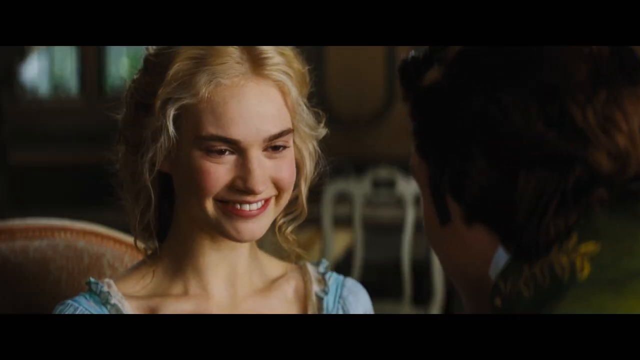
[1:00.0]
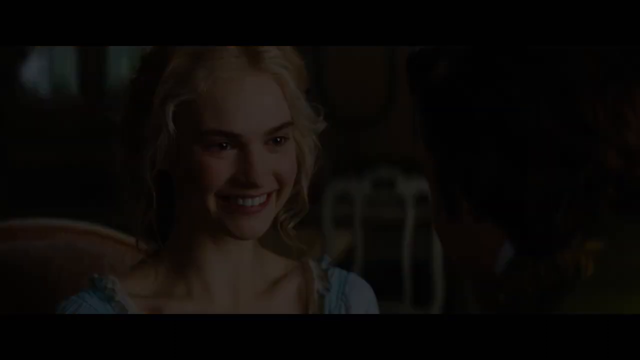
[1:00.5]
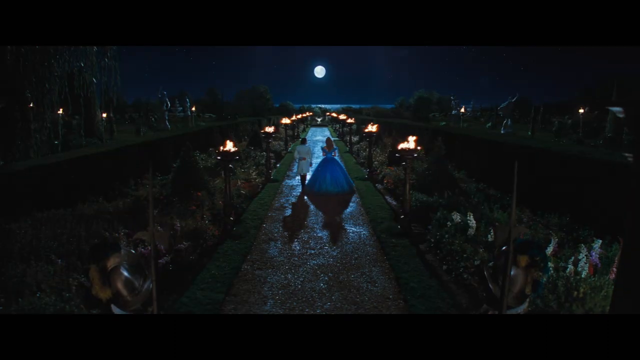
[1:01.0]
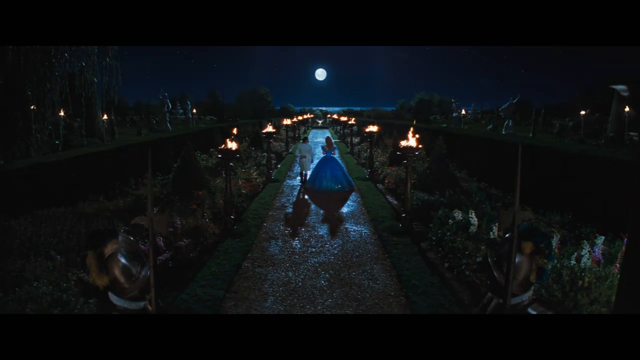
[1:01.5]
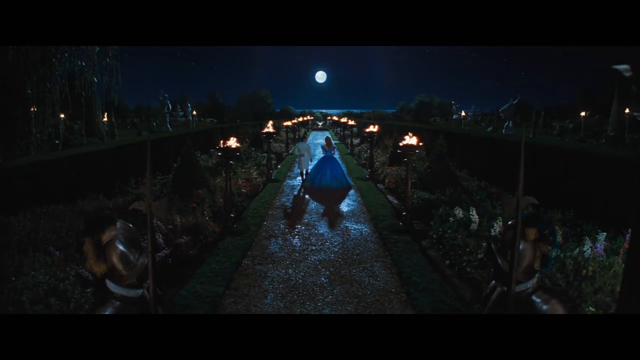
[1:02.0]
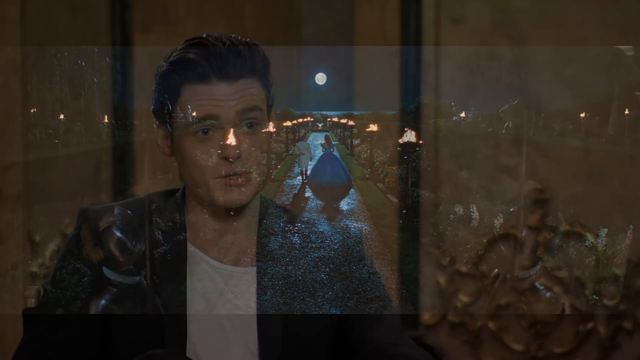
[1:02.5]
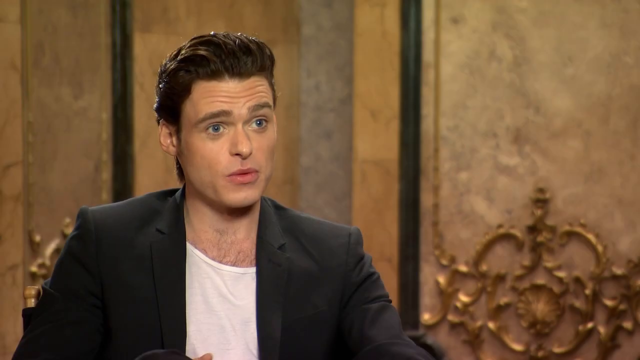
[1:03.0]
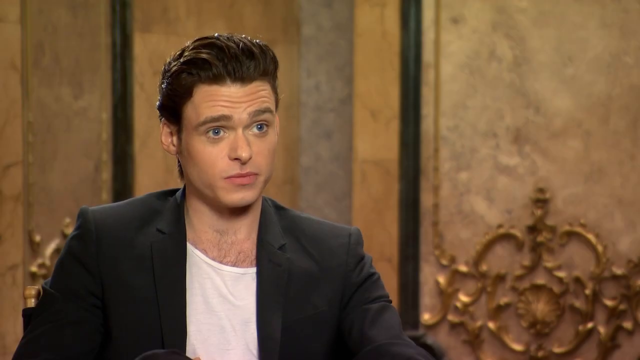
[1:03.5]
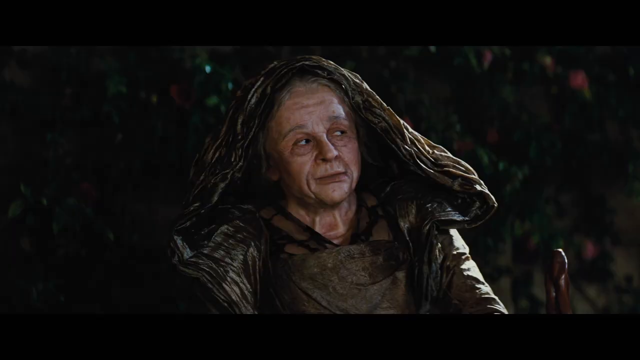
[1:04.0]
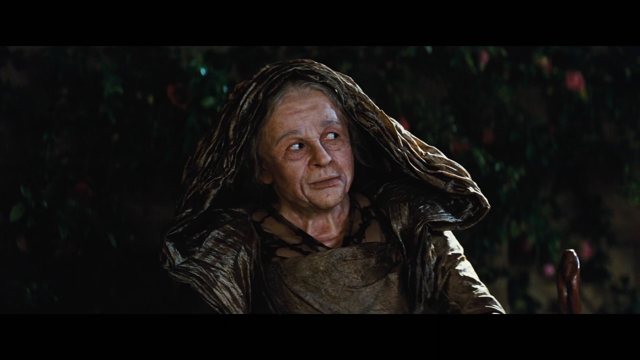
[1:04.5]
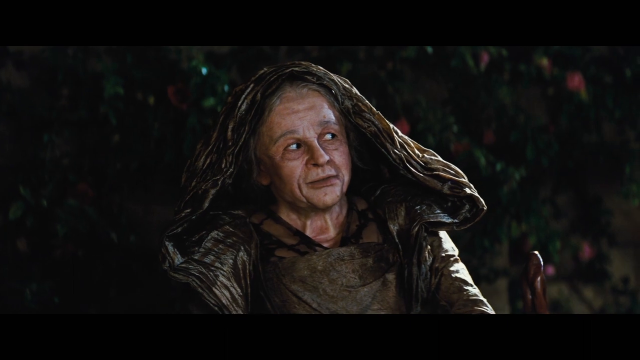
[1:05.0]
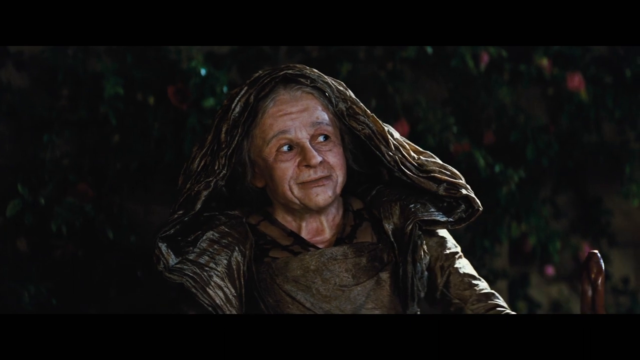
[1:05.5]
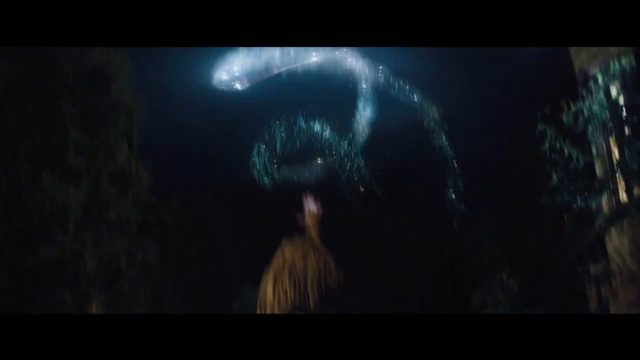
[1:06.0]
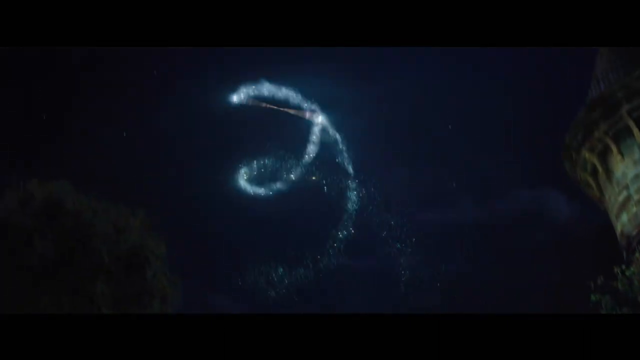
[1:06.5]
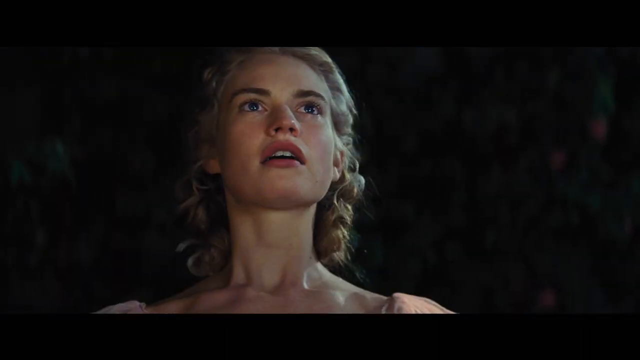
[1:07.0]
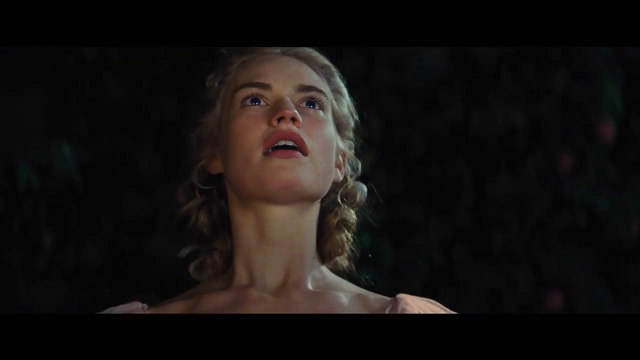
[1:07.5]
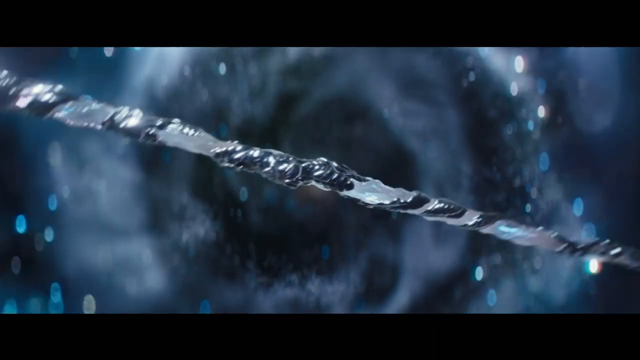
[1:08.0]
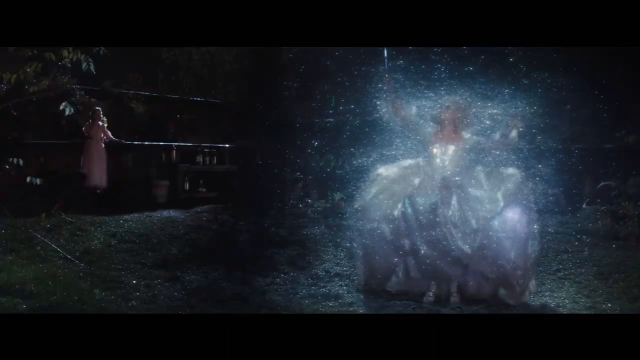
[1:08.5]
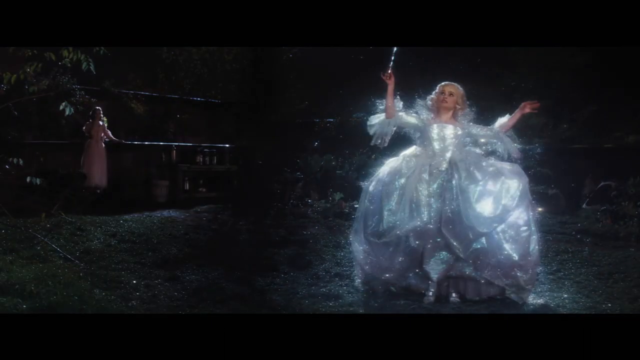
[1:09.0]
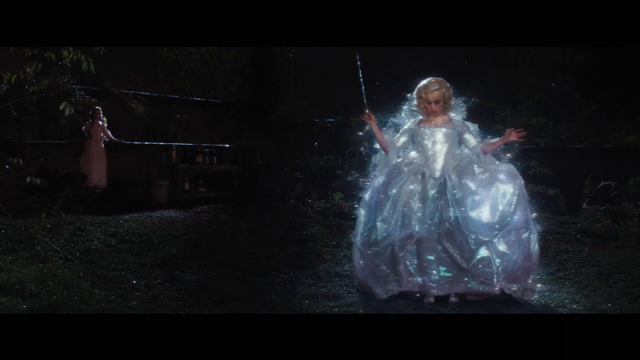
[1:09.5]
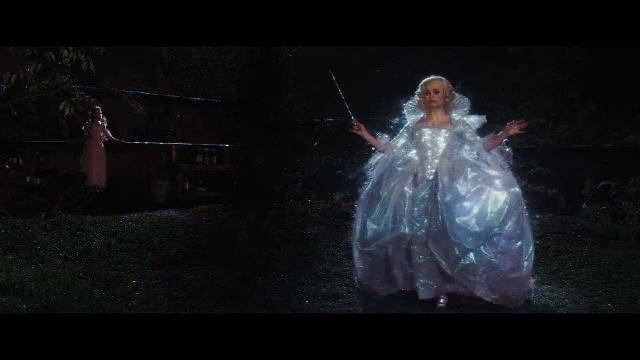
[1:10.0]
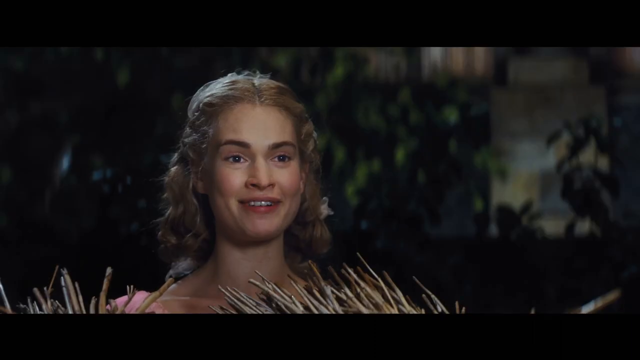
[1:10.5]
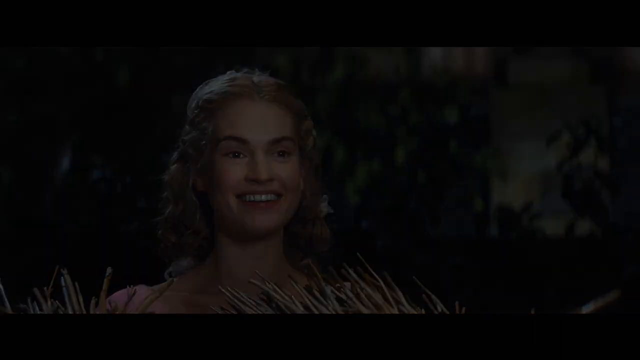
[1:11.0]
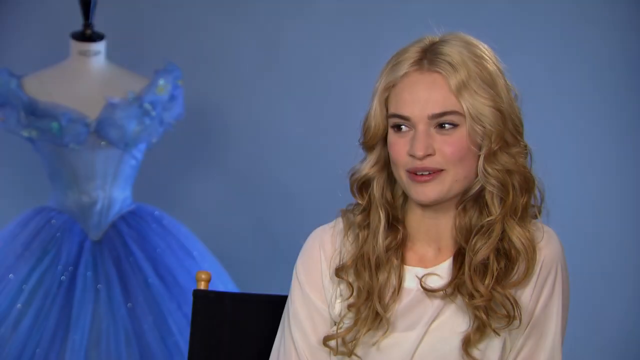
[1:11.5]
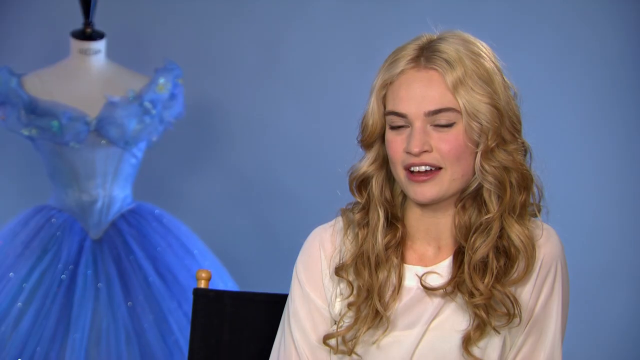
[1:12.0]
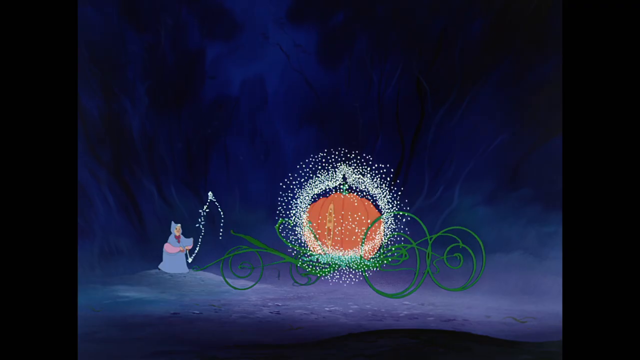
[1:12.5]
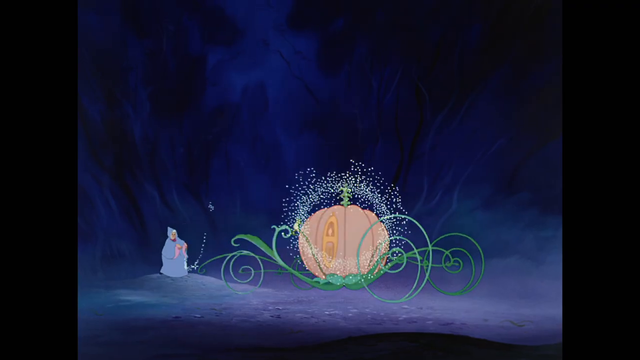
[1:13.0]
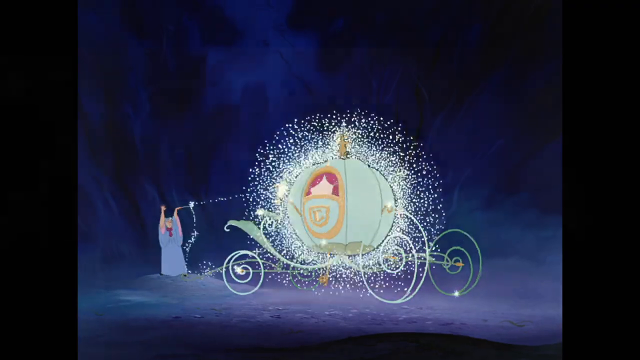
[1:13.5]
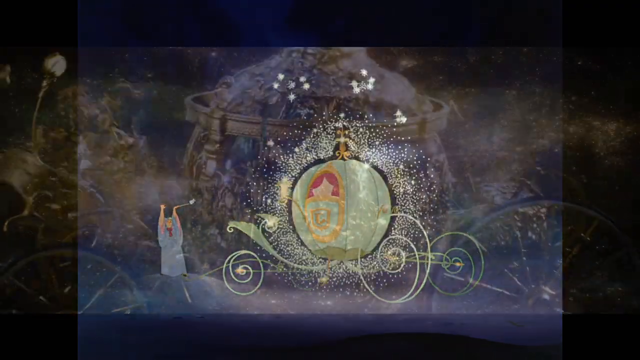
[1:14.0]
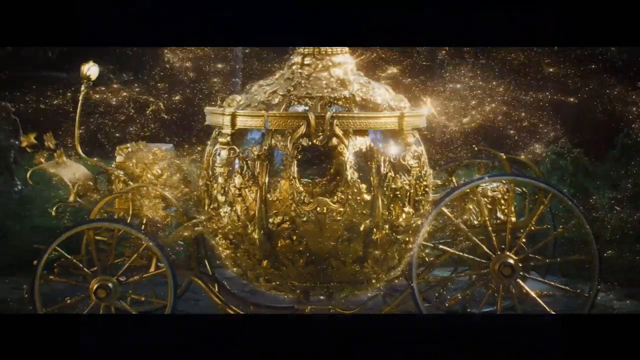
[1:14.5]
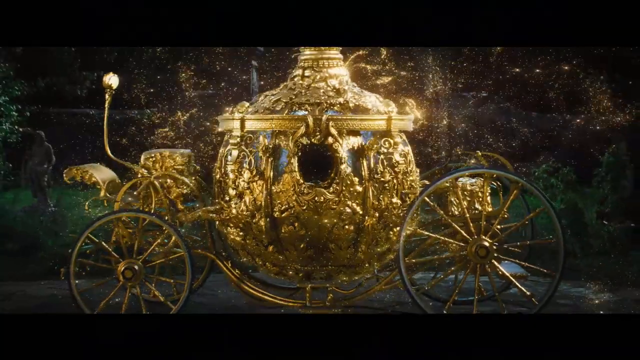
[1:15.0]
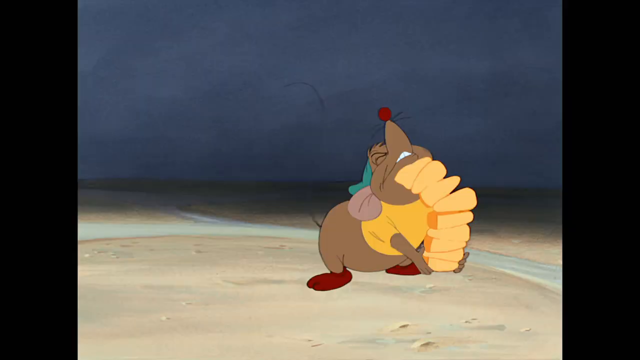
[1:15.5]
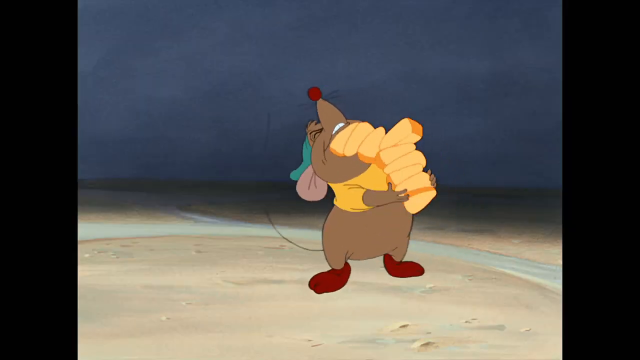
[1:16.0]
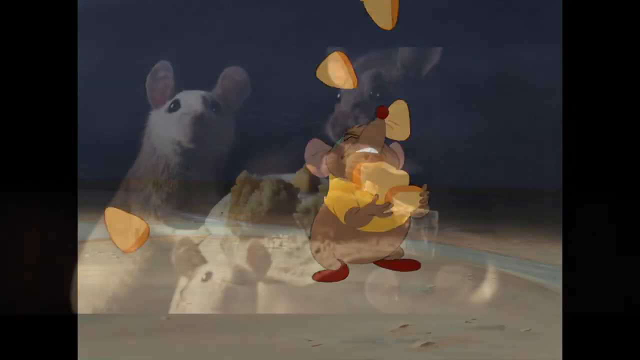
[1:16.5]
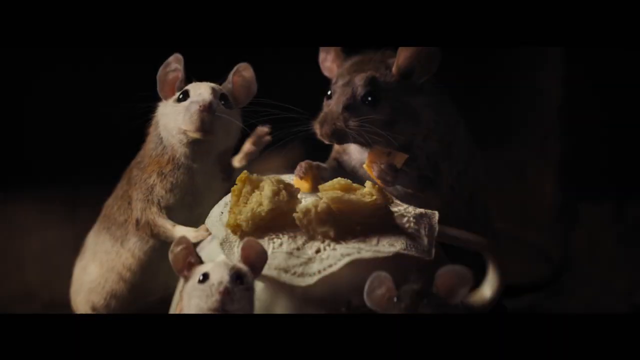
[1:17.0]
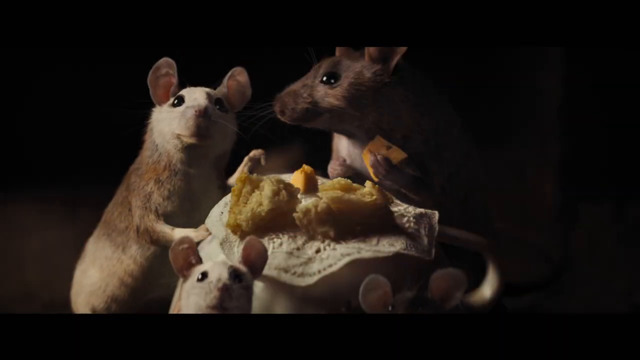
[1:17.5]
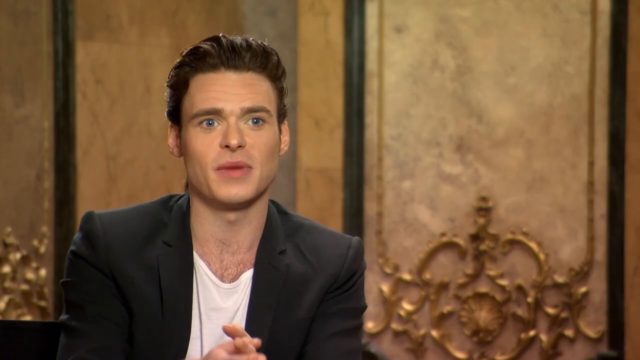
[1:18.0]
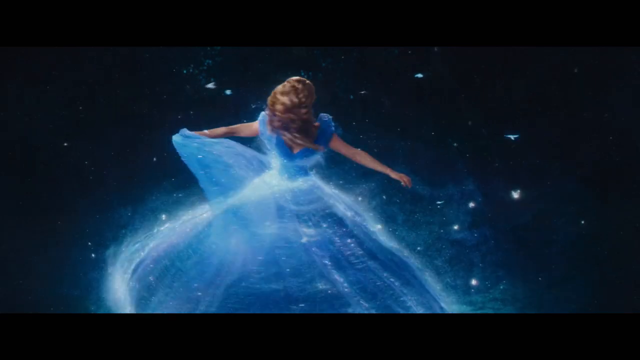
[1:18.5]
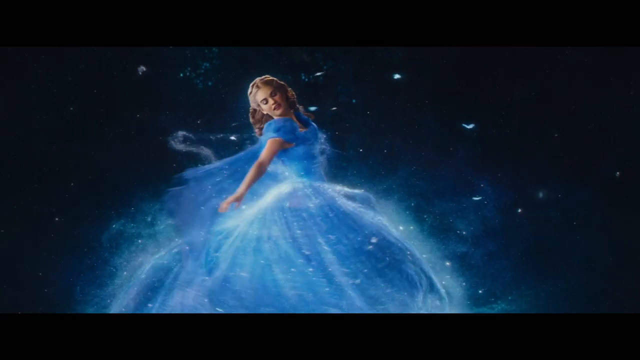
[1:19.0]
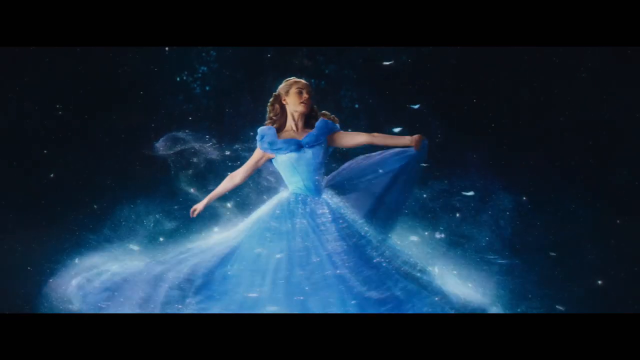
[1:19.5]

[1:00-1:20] Cinderella meets the fairy godmother, a kind of old woman wearing deep brown silk clothes with a hood on her head. The fairy godmother changes Cinderella's look, making her very beautiful in the most beautiful gown, and gives her a golden chariot. The golden chariot has four golden wheels. An animated part of the movie shows the chariot being made out of a pumpkin and a mouse eating a loaf of bread. The prince is also shown wearing a black suit and white jacket, seated in a room, talking about the movie.